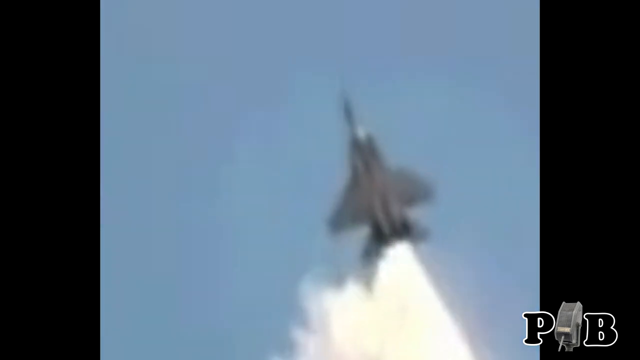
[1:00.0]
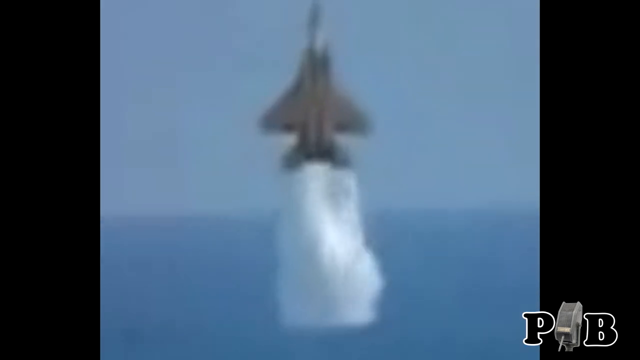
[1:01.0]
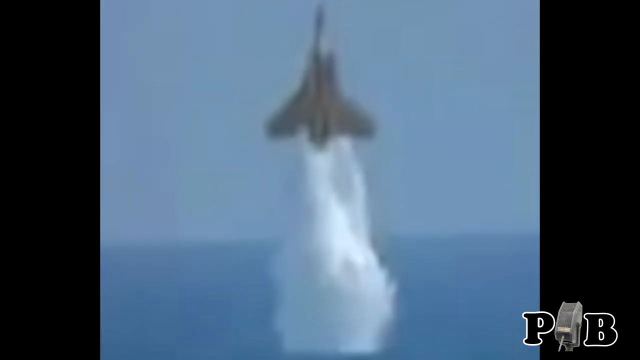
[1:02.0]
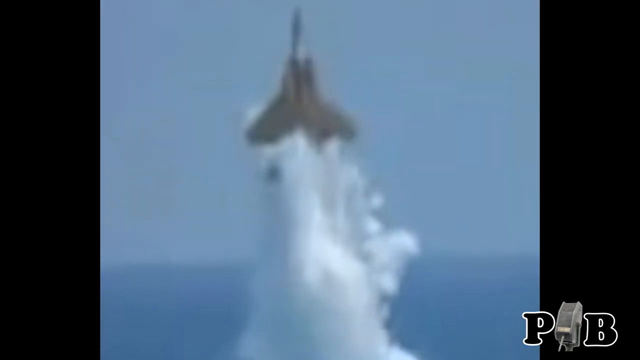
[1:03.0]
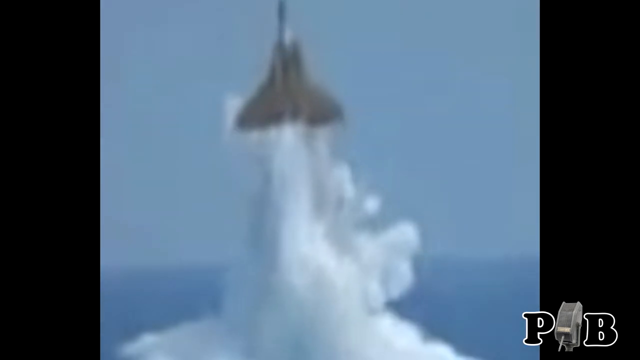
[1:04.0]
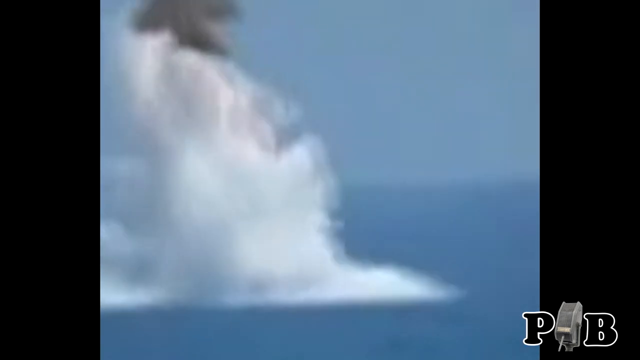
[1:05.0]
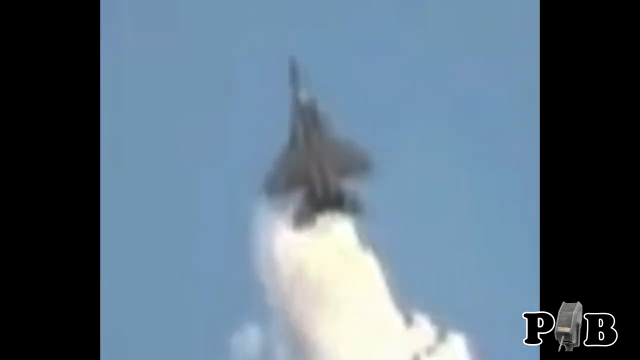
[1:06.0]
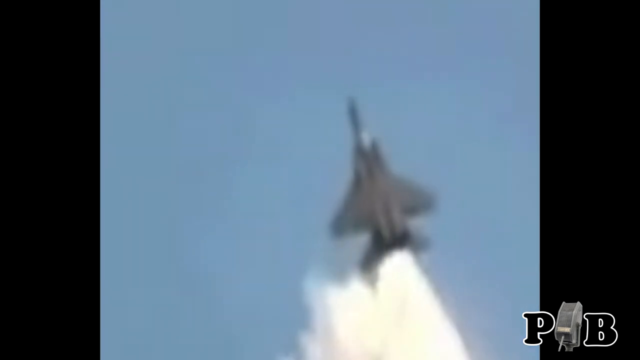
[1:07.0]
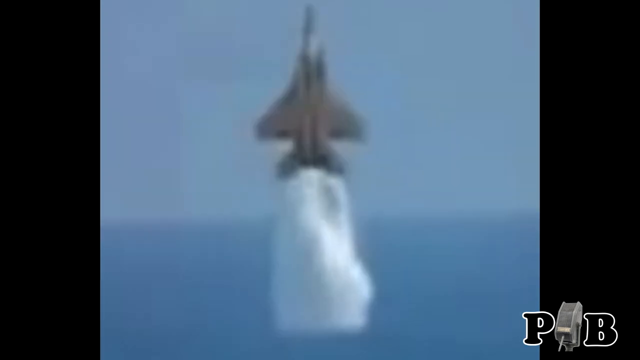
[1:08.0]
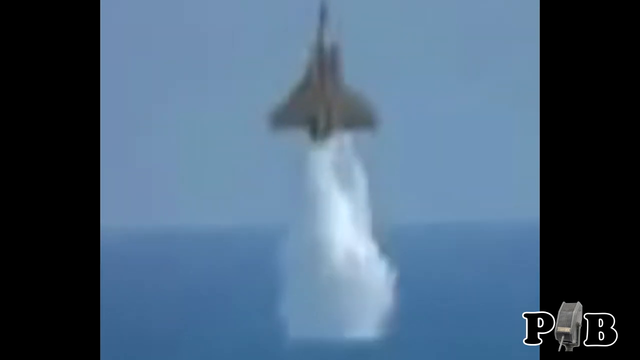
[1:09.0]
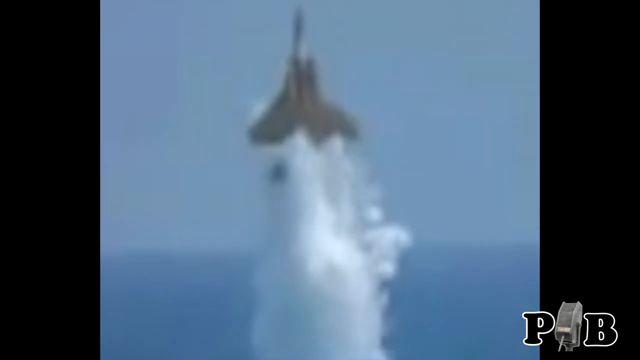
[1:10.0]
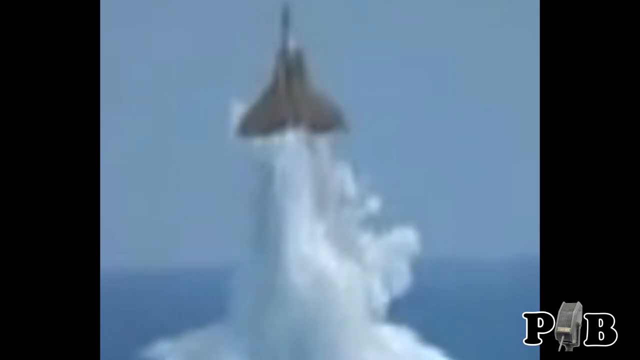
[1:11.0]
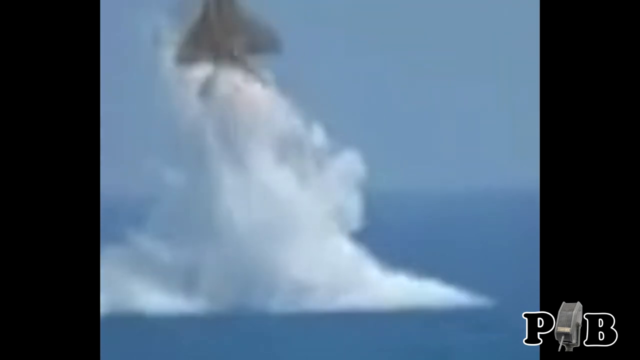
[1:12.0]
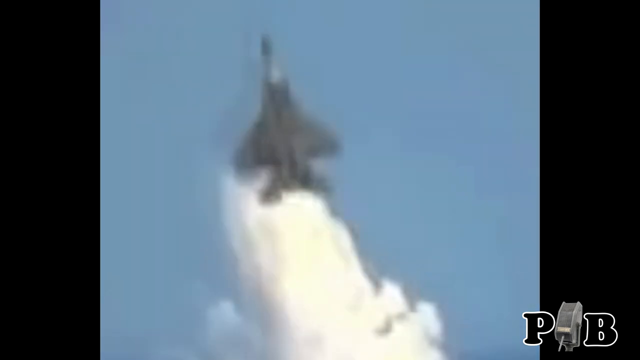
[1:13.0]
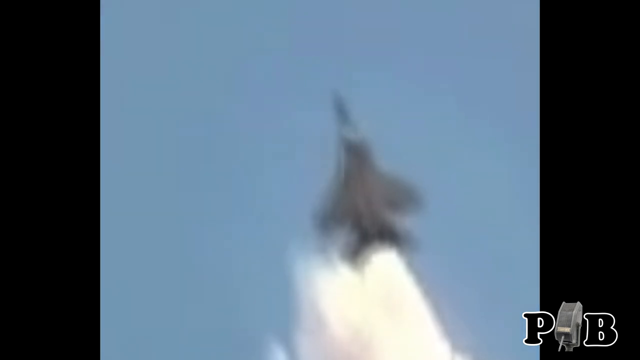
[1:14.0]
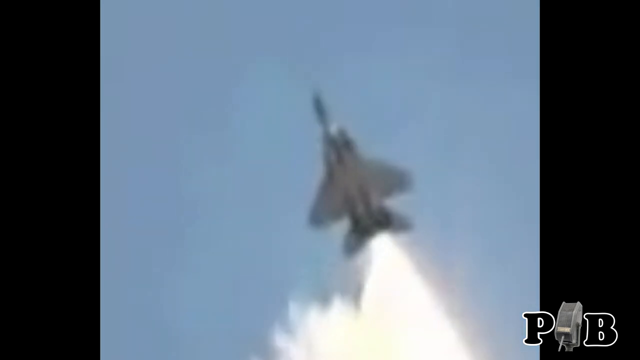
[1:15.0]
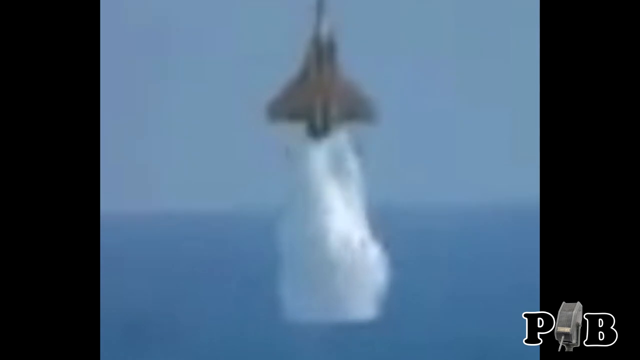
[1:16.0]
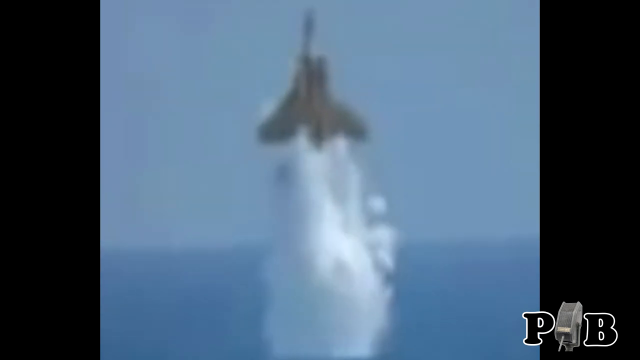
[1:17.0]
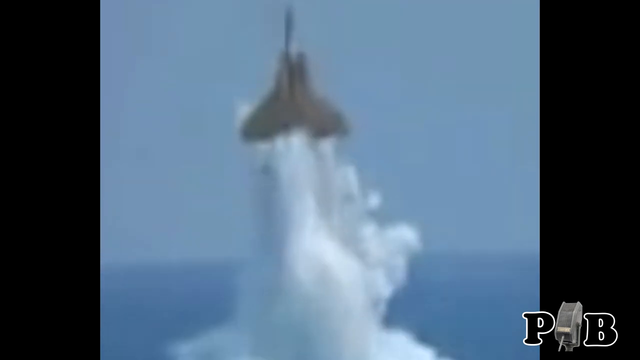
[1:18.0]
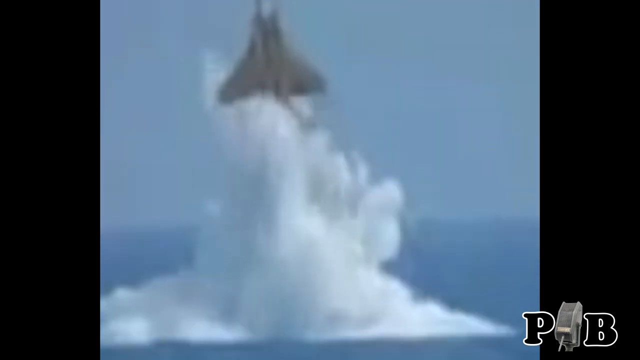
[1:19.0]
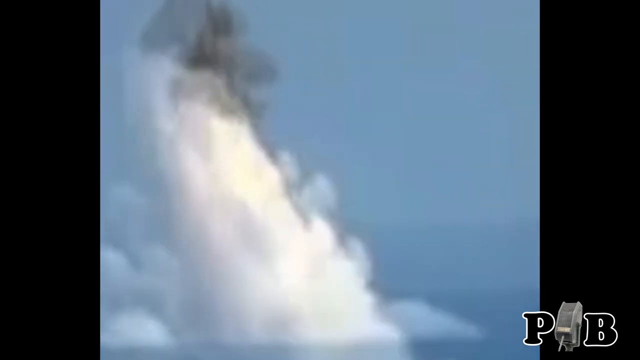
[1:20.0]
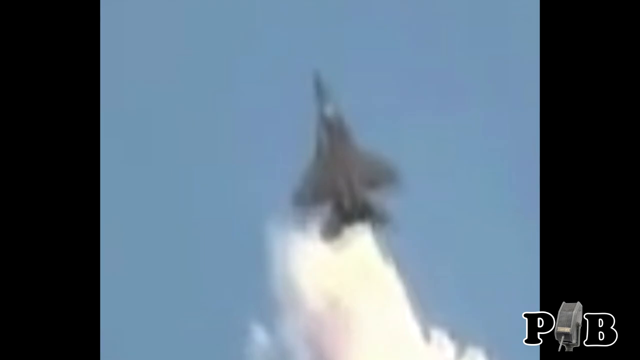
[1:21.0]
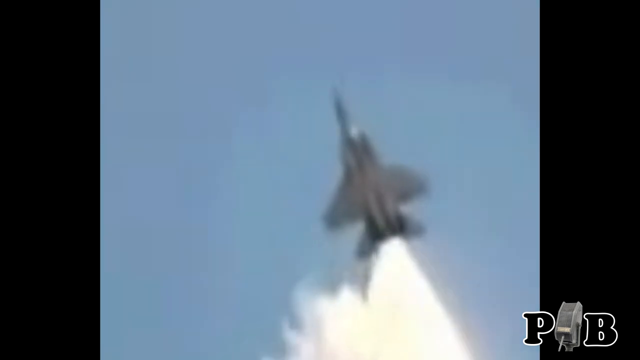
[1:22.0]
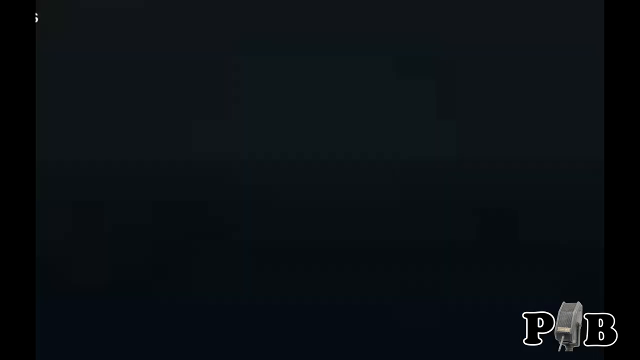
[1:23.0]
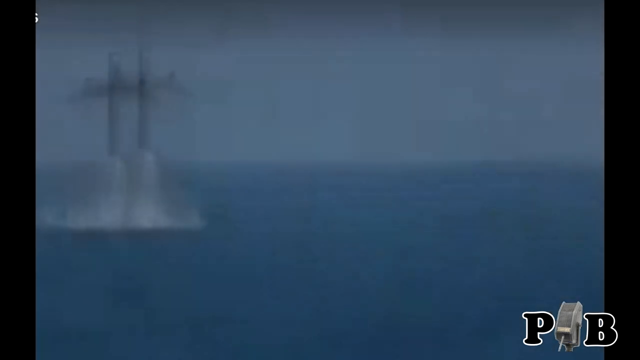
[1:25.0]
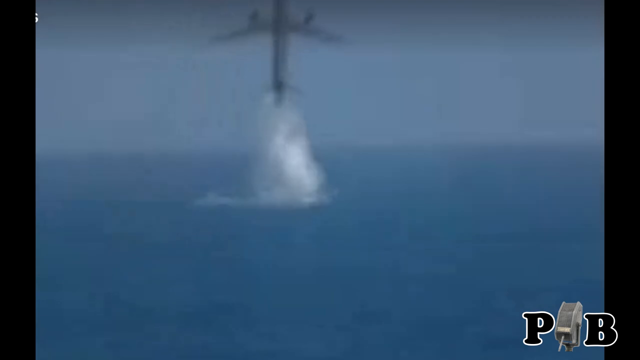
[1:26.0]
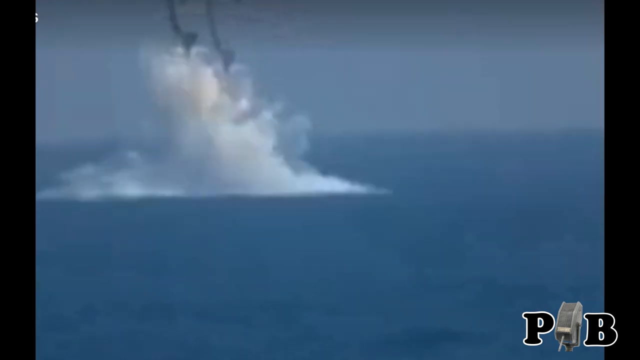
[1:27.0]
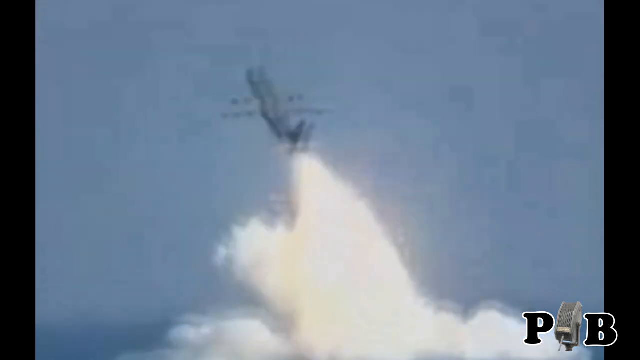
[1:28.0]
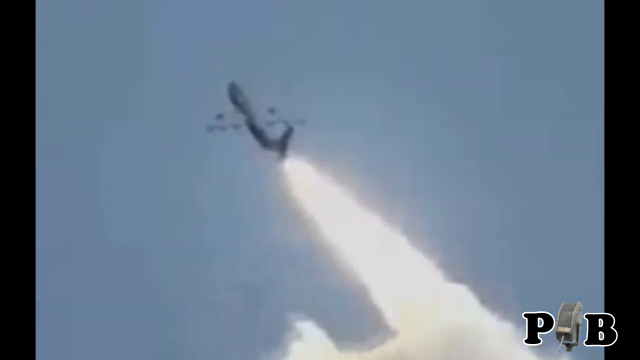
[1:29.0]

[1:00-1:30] A slow-motion, very close-up view shows the jet leaving the water and going into the air, repeated again and again. The footage then changes to a different kind of plane in the same shot; the plane seems similar to a passenger plane, like a Boeing or an Airbus. It also leaves burning yellow flames, with blue and white clouds behind it. The engines are on the wings, but the flame comes from the tail of this passenger plane, so it appears to be a bad Photoshop job.